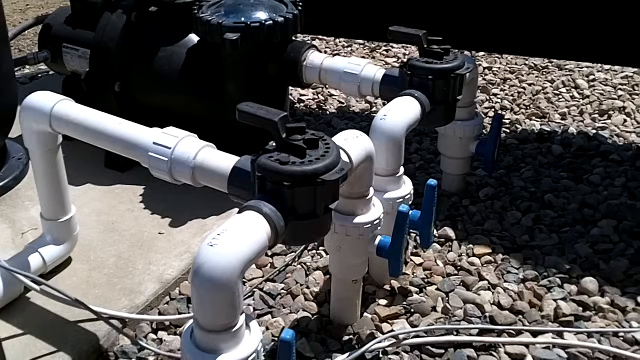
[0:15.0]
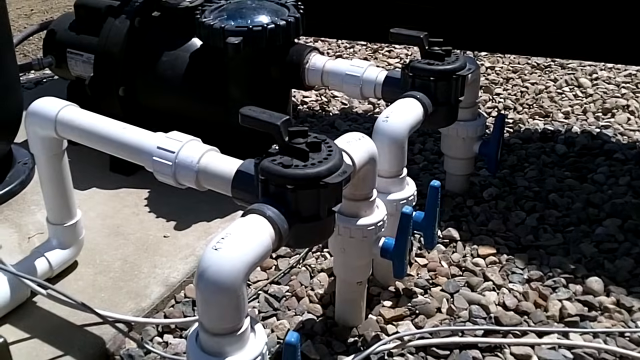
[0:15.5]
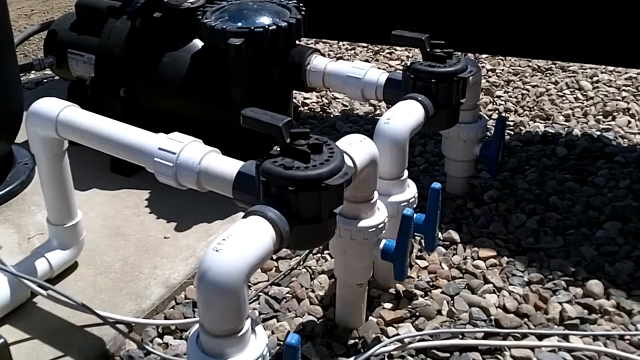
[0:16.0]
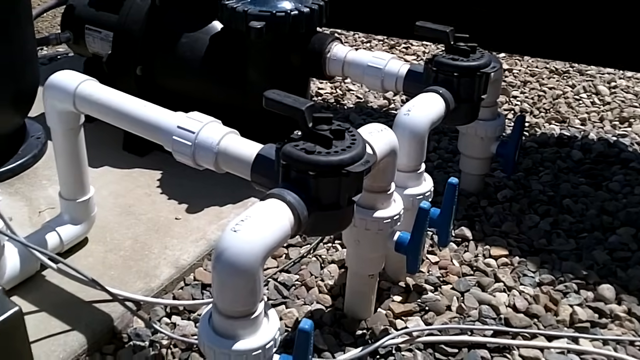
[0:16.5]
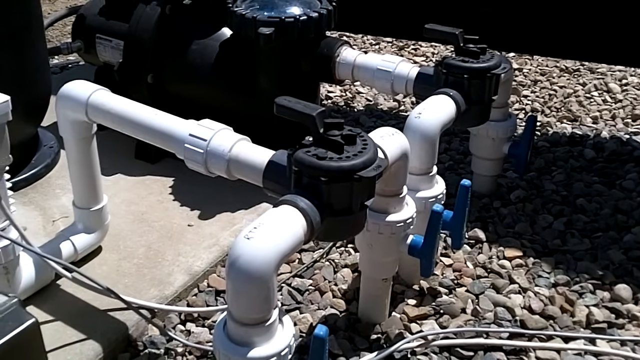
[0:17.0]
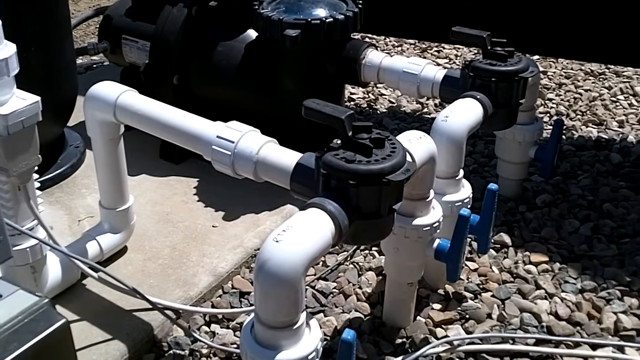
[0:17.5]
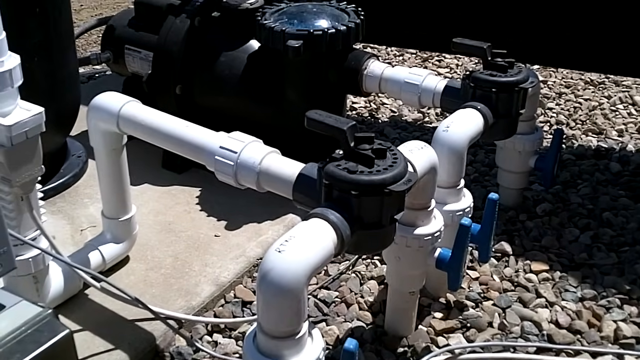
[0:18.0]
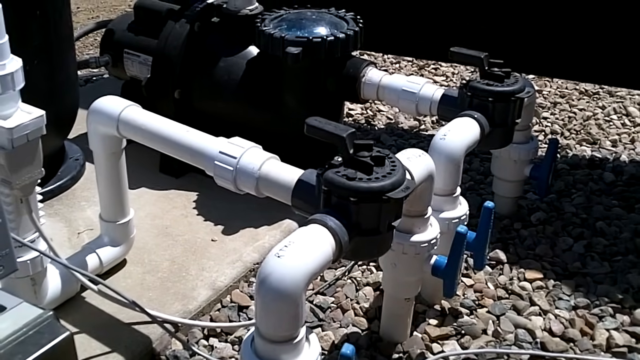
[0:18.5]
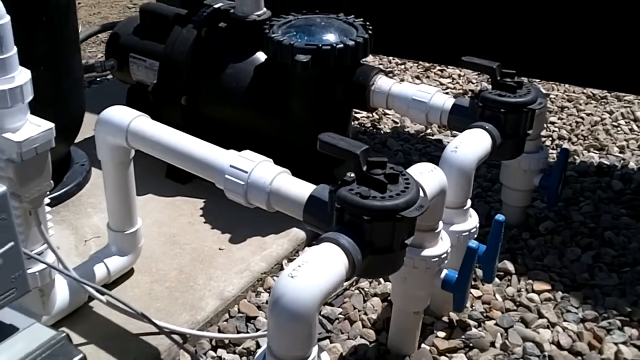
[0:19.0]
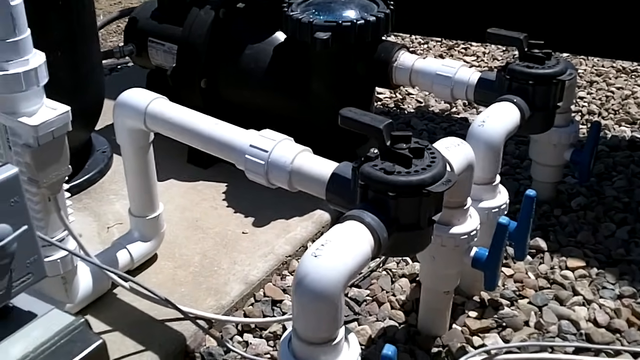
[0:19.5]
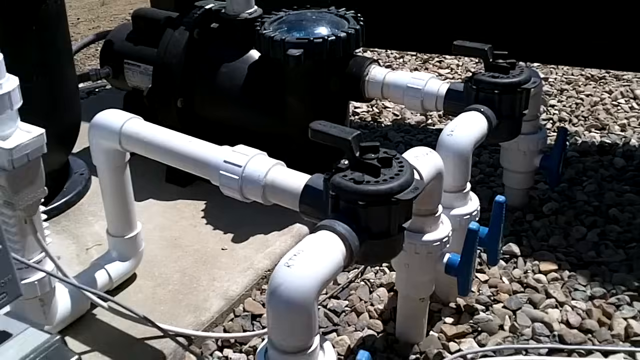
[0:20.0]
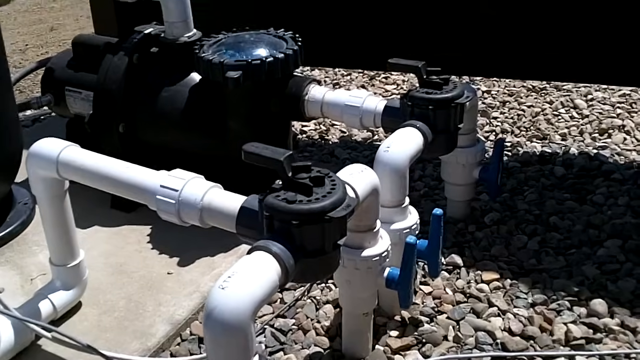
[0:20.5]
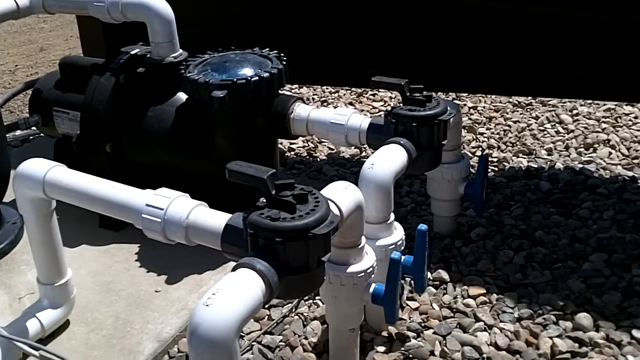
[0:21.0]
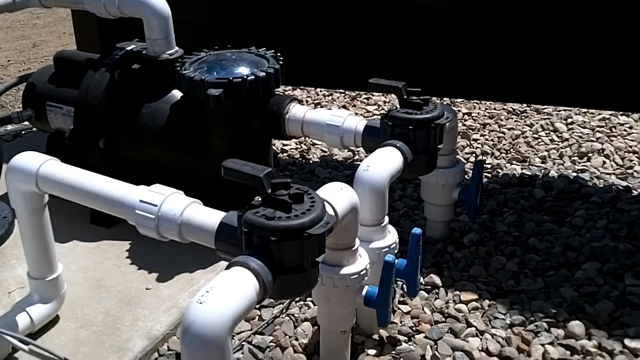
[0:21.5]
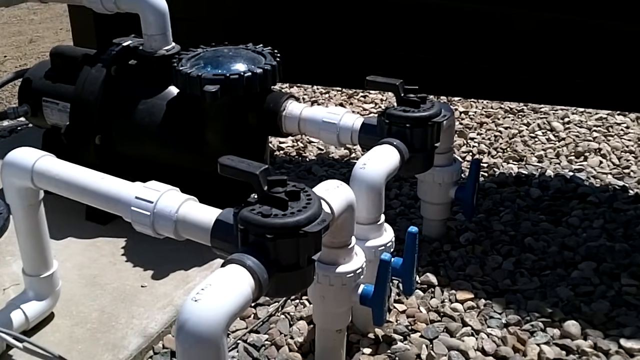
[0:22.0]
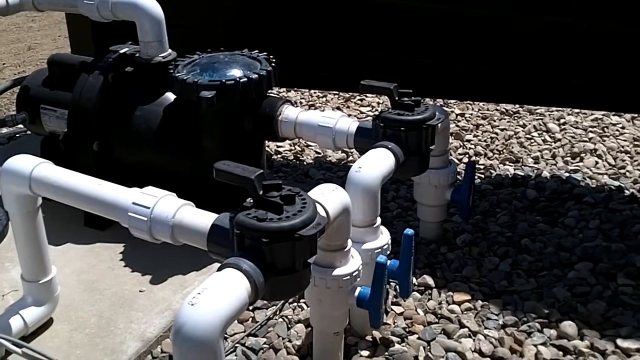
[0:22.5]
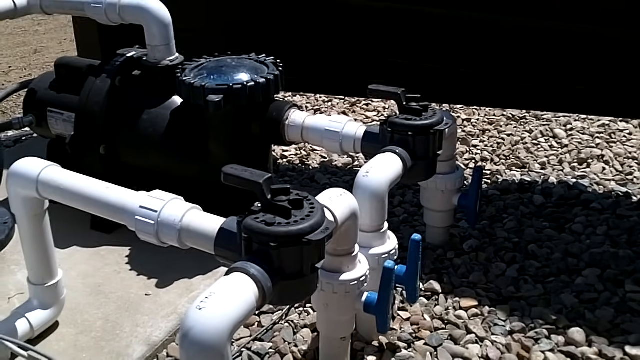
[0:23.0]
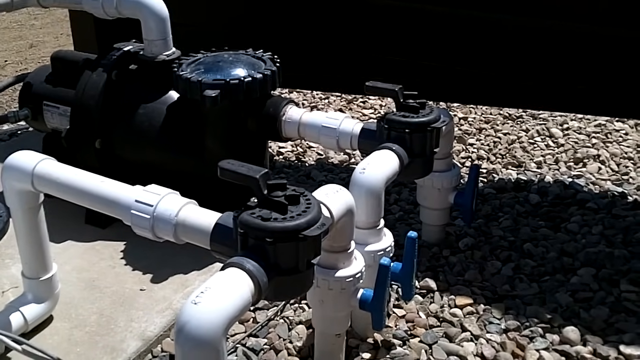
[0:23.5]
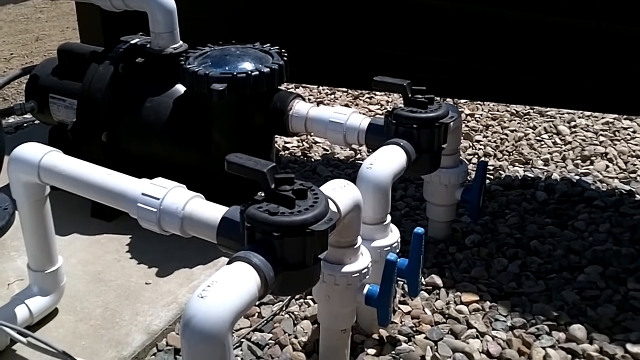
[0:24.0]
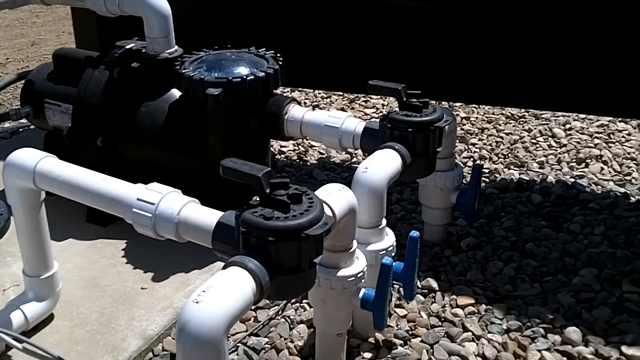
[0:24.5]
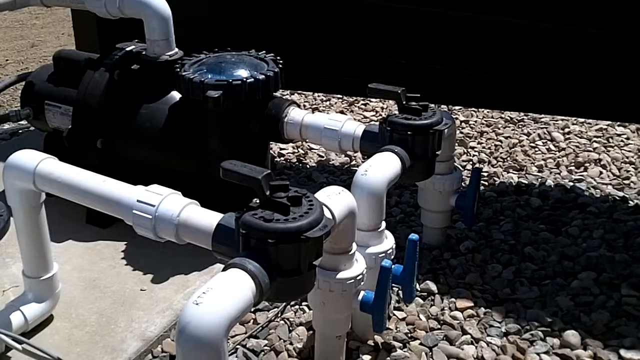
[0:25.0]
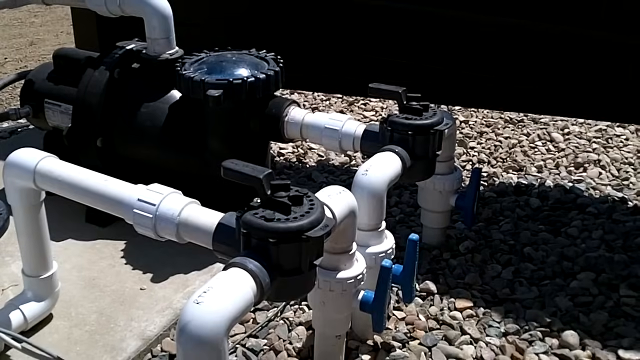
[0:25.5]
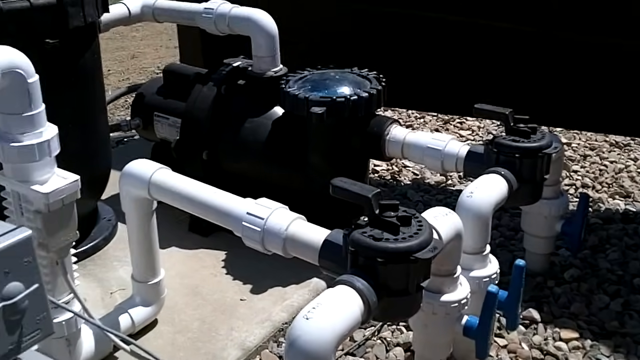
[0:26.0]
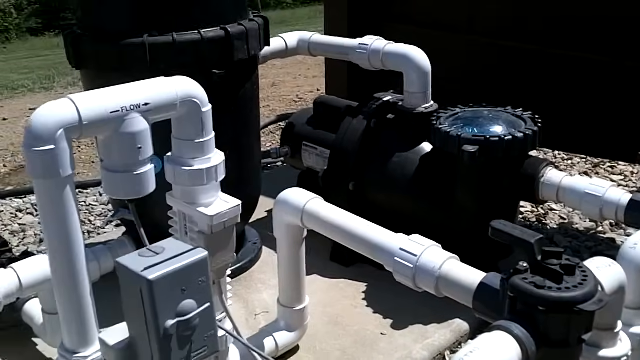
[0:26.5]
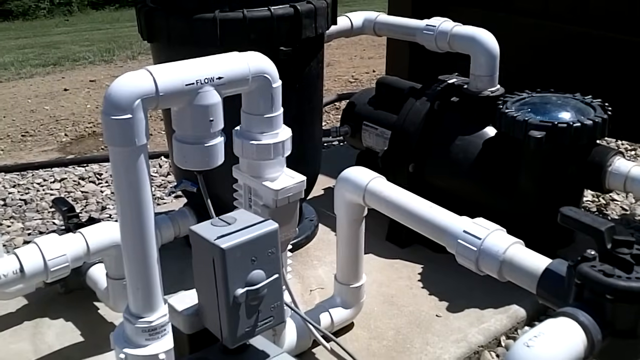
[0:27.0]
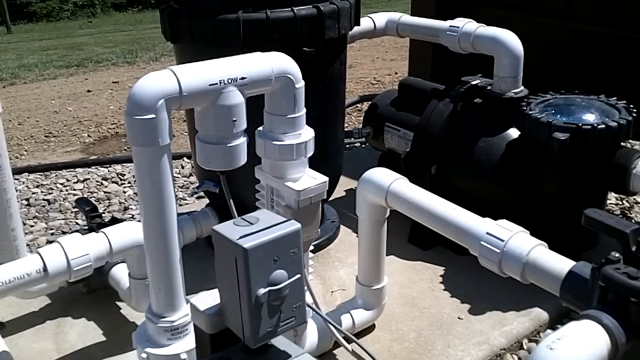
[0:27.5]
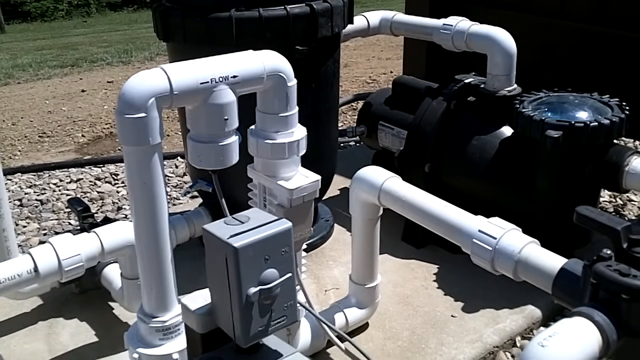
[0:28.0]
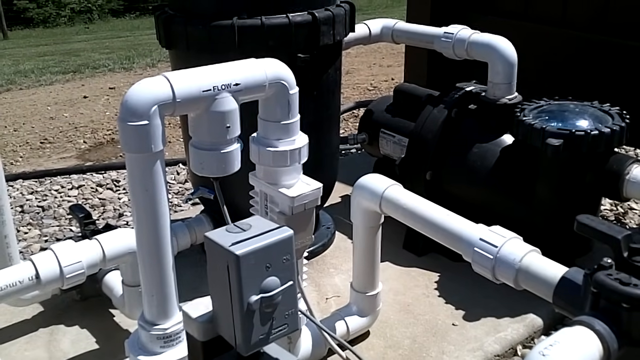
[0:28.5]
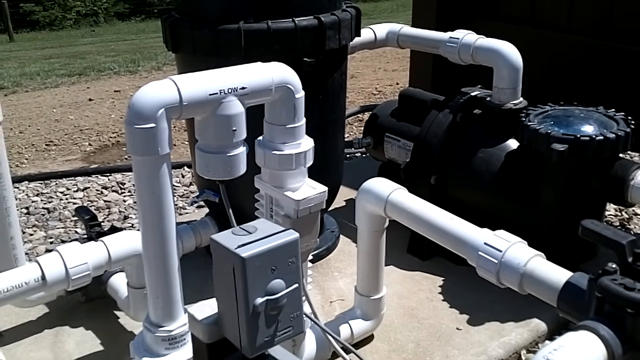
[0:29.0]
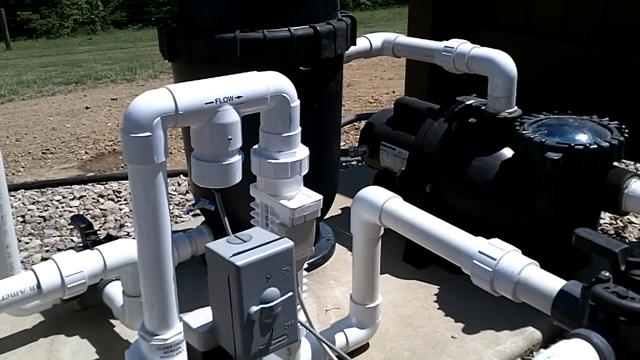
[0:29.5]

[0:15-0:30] The view focuses on the equipment's white tubing with black connectors; the black connector has a lever. In the background is a black, kind of cylindrical apparatus with something like a blue clear film of glass on it, and water can be seen almost kind of swirling and bubbling inside. There is also a larger black contraption, almost like a trash can, connected to everything. A couple of blue levers are on the side of the white tubing. There is a gray box and more tubing. The word "flow" is written in blue on some of the tubing, along with other writing that is hard to make out. The yard in the background shows green grass, dirt and gravel, and the ground is a lot of rocks and cement. The setting almost looks like it could be in the desert.